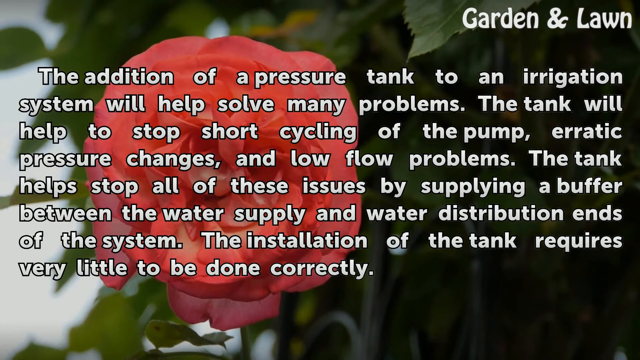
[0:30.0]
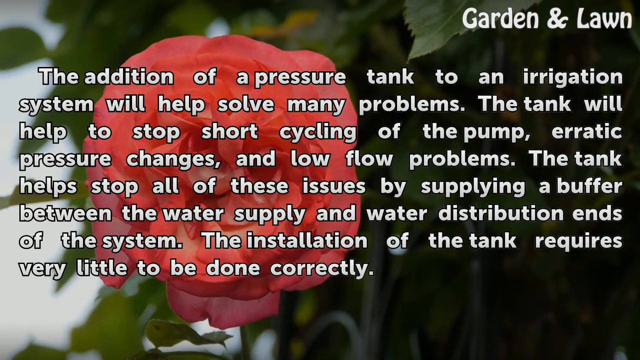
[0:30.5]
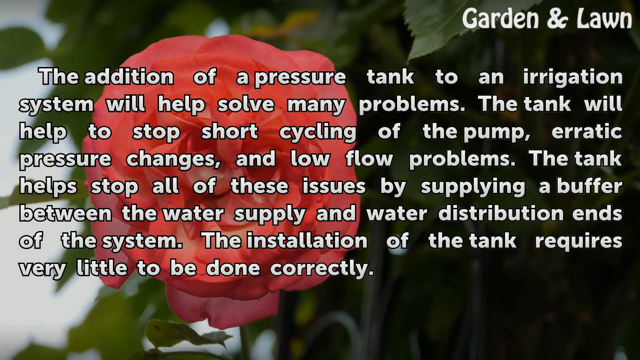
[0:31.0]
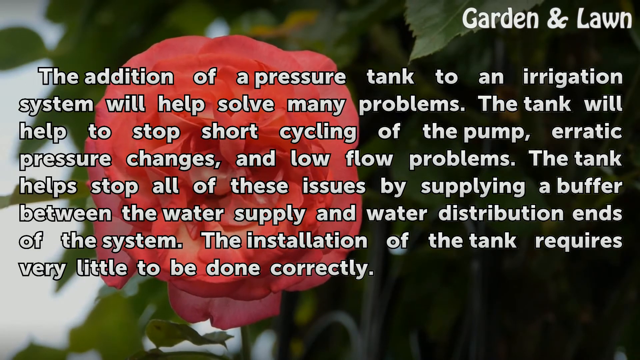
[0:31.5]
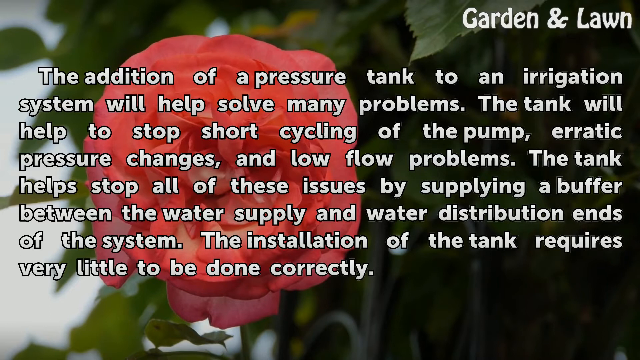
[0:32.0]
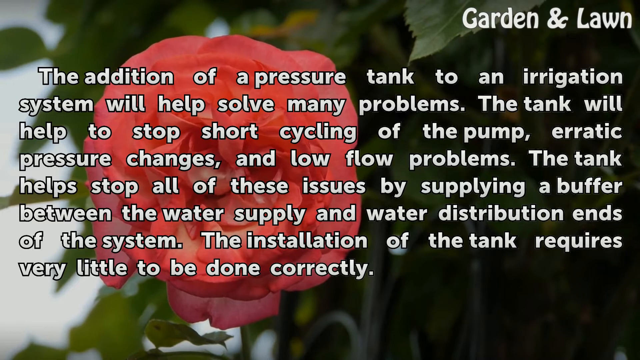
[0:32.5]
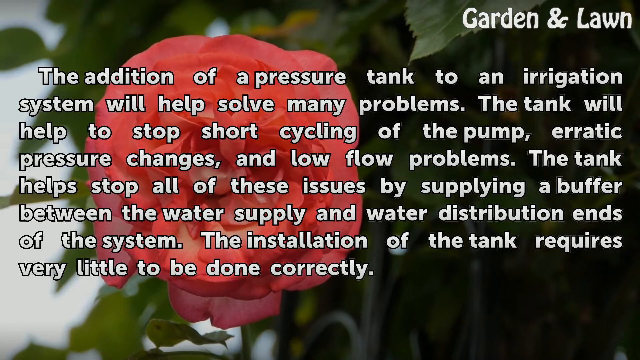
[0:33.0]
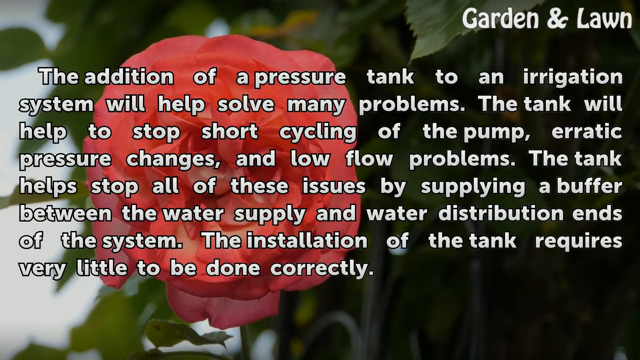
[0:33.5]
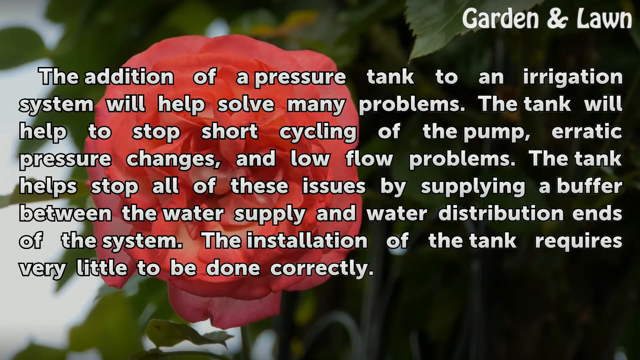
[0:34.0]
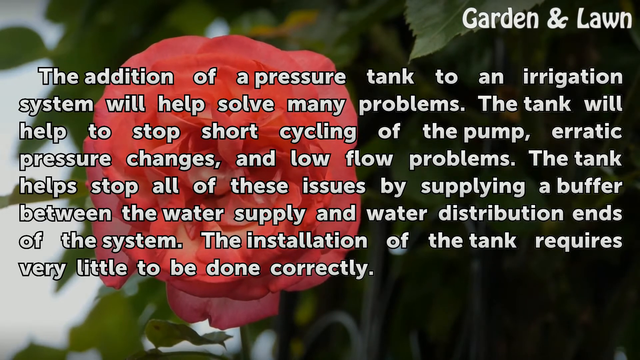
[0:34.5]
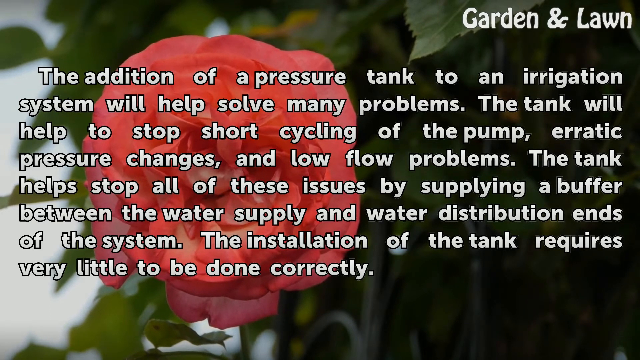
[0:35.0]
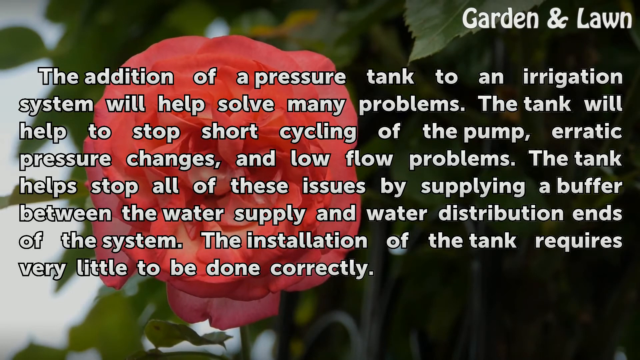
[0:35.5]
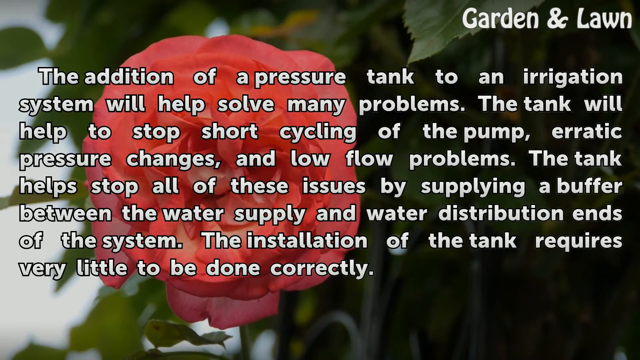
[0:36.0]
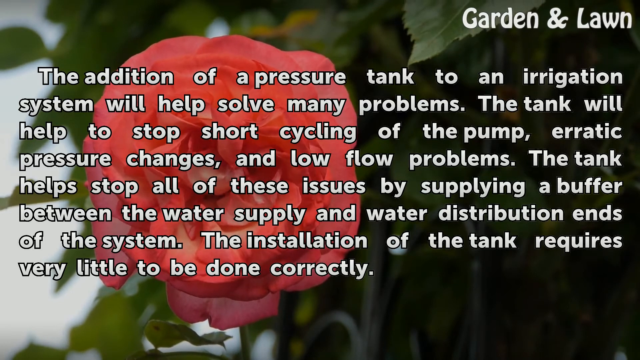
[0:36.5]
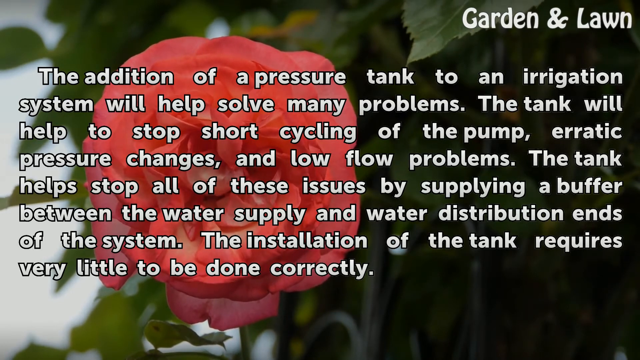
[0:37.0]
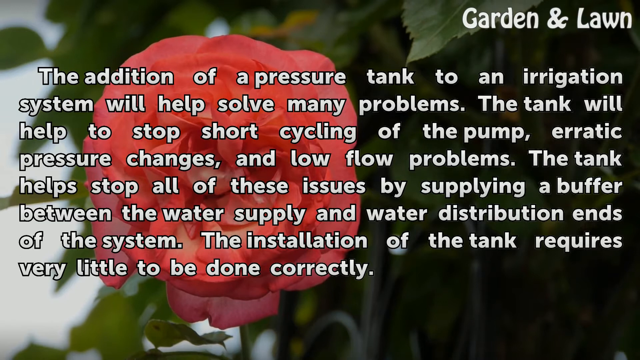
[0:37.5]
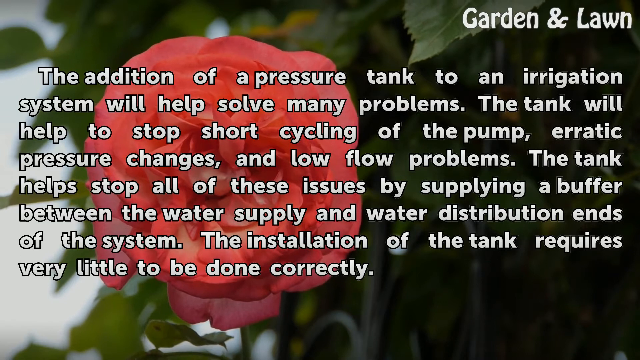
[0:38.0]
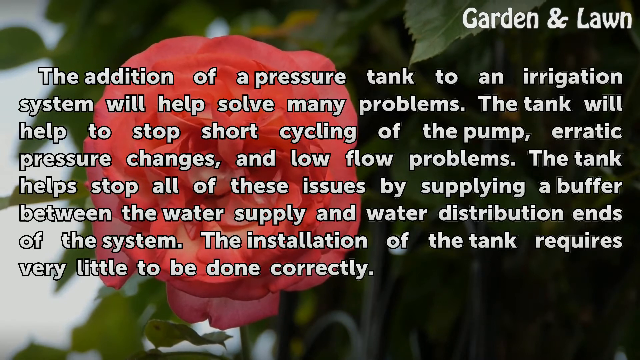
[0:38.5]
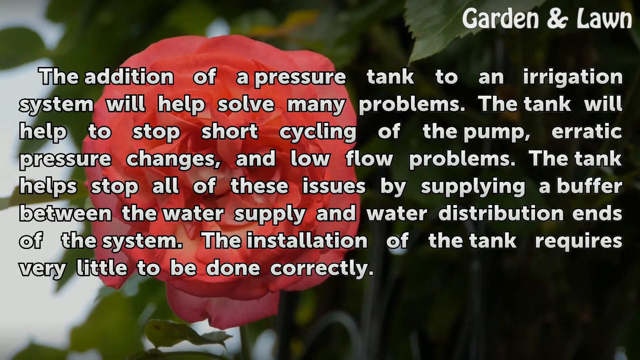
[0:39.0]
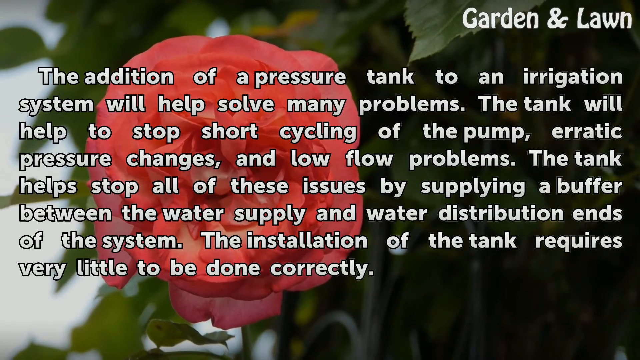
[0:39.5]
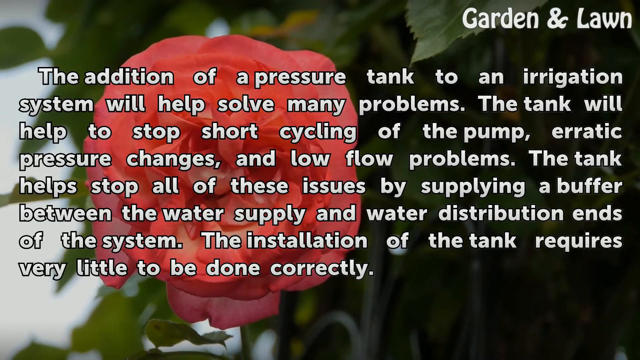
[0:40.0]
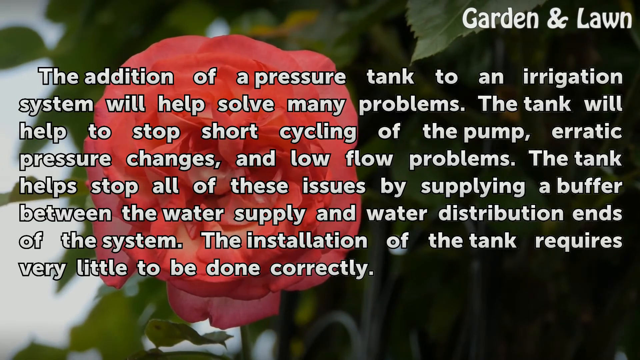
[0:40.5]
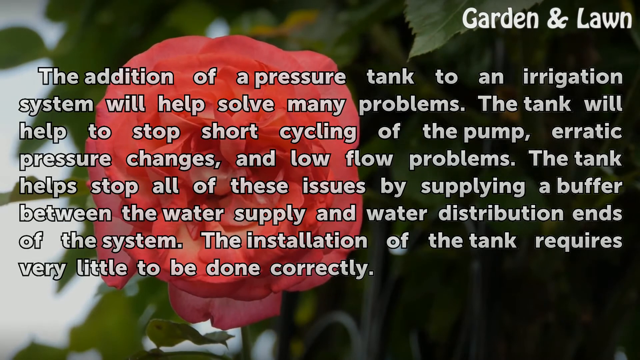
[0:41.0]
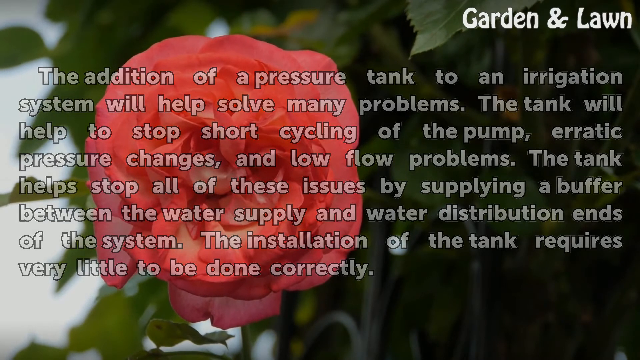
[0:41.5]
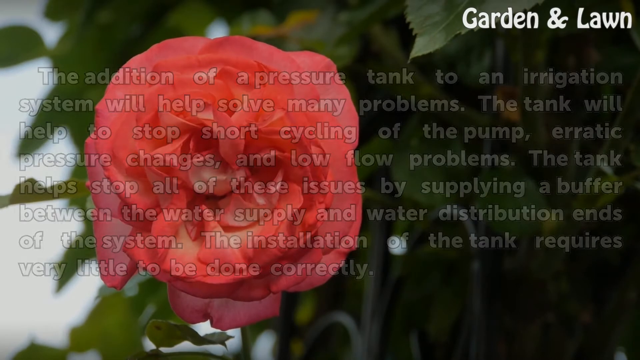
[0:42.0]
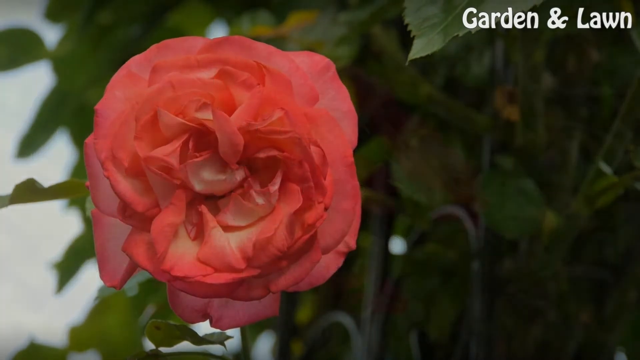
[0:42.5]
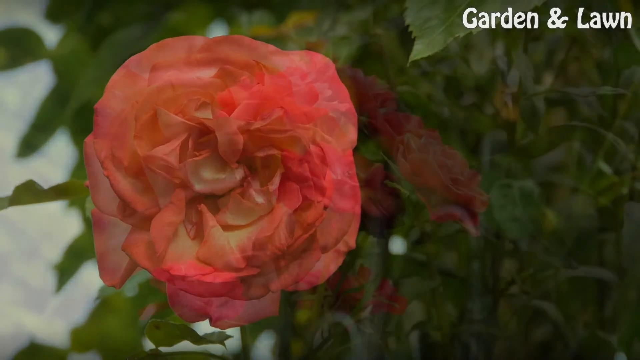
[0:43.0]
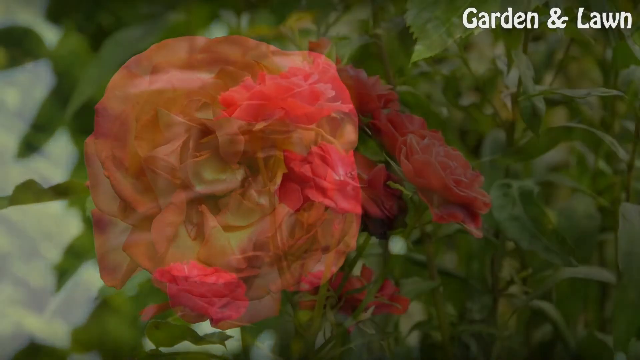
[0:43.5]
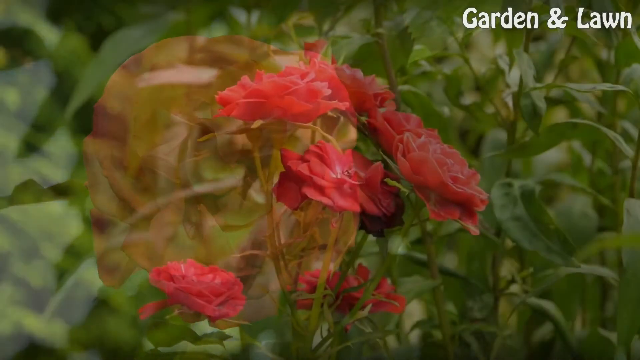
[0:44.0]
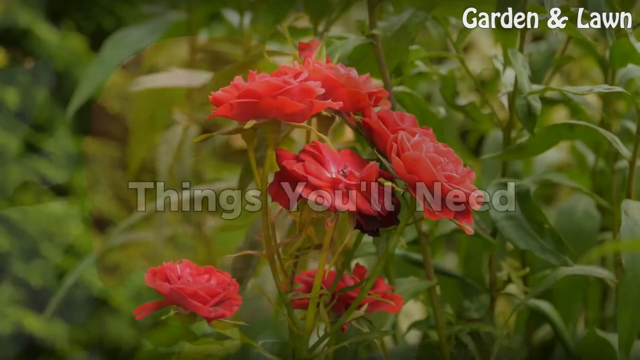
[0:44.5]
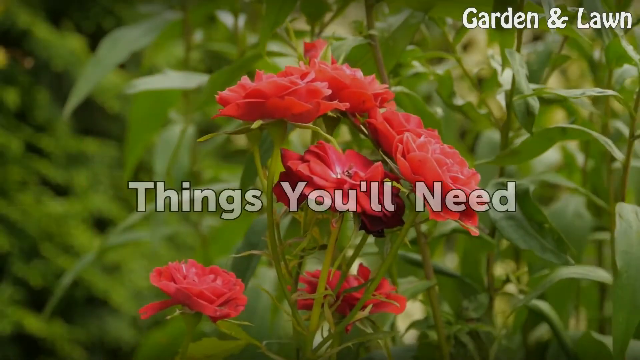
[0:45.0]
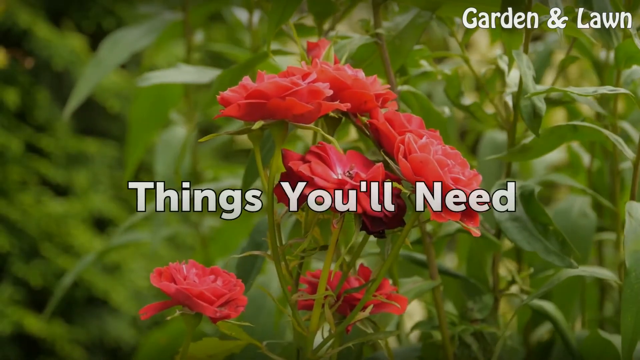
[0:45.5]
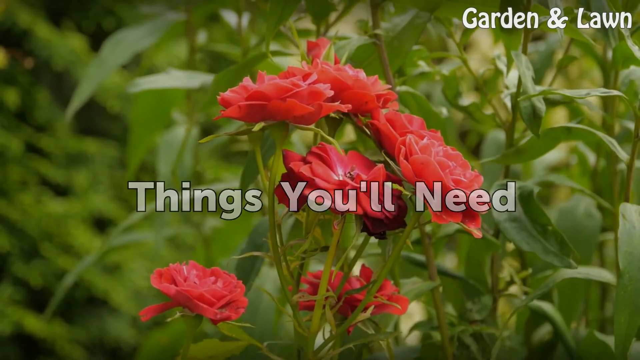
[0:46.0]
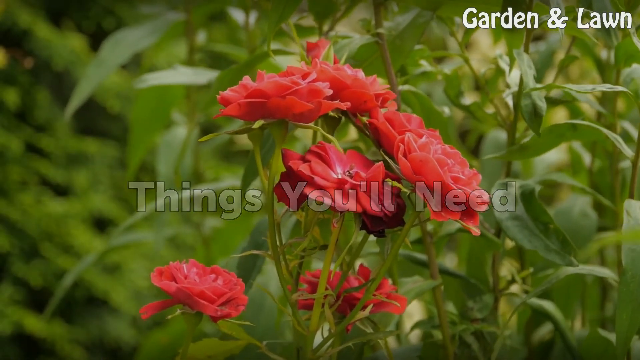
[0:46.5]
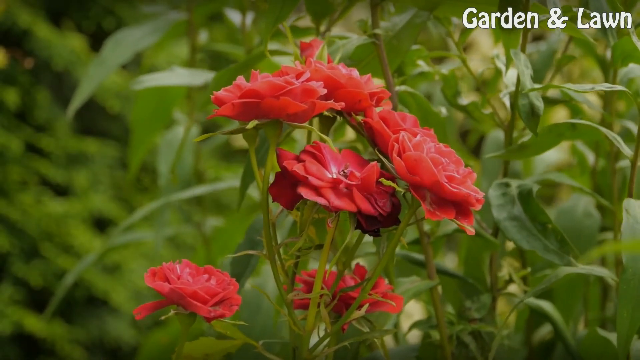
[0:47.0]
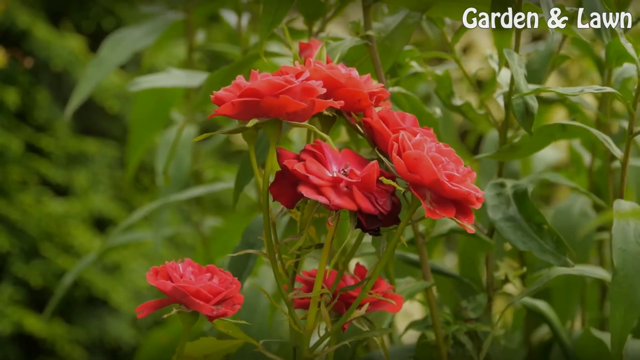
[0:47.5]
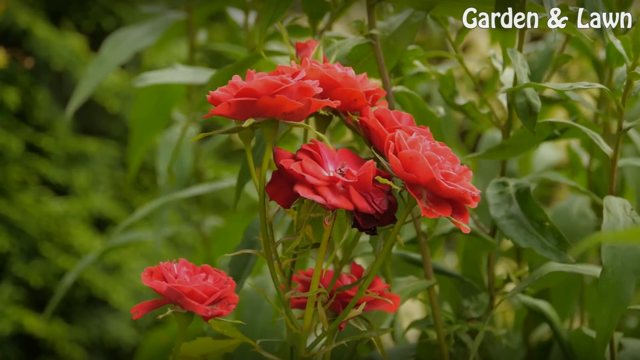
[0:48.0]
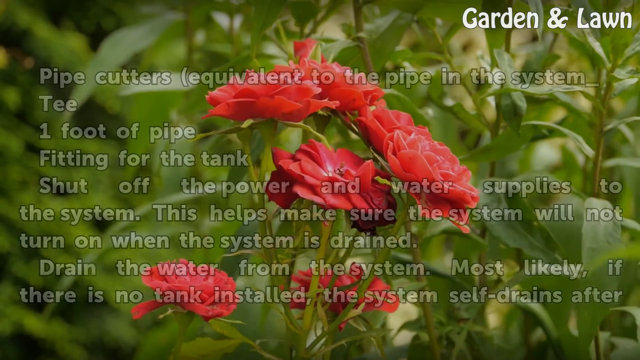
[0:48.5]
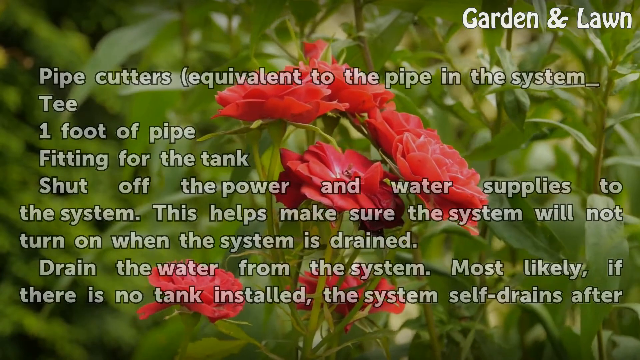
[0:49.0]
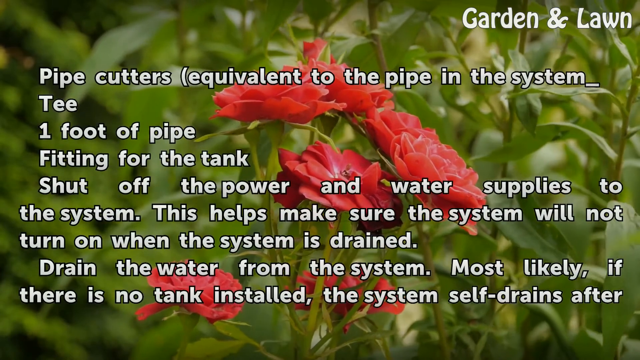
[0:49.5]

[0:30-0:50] The garden and lawn video continues with the message that the pressure tank can solve many problems, as it supplies a buffer between the water supply and water distribution ends of the system, and that the installation of the tank requires very little to be done correctly. Behind the text is a red camellia flower or rose, its leaves and flower gently moving in the breeze while the caption remains on screen. The caption then fades and the image changes to a red rose bush with the title "Things you'll need", followed by text including "cutters equivalent to the pipe in the system", "one foot of pipe", "fitting for the tank", "Shut off the power and water supplies to the system. This helps make sure the system will not turn on when the system is drained. Drain the water from the system. Most likely, if there is no tank installed, the system self-drains after."